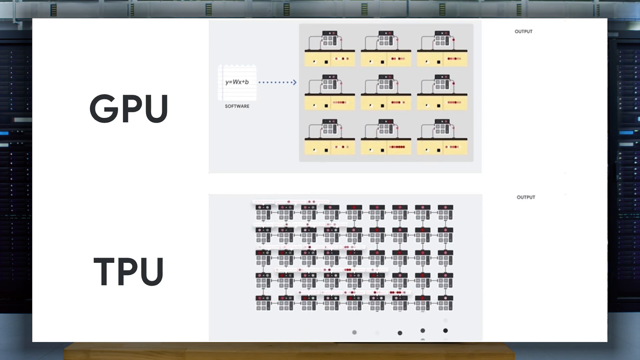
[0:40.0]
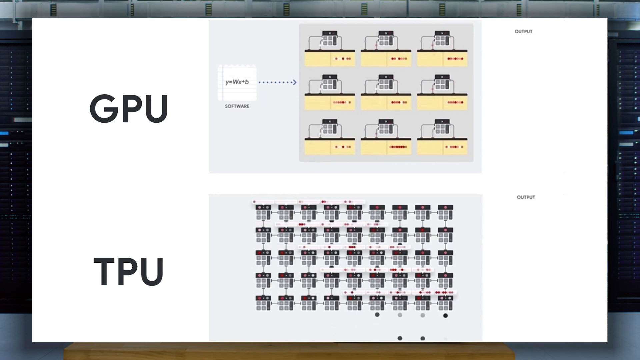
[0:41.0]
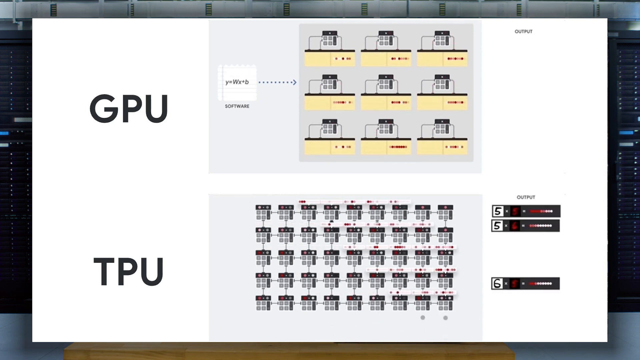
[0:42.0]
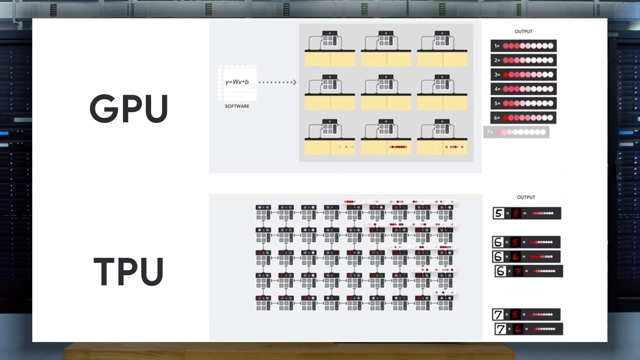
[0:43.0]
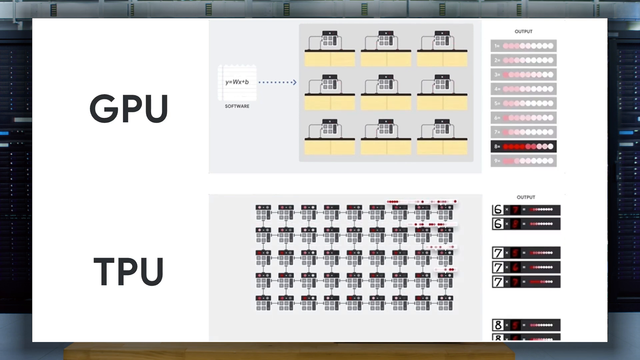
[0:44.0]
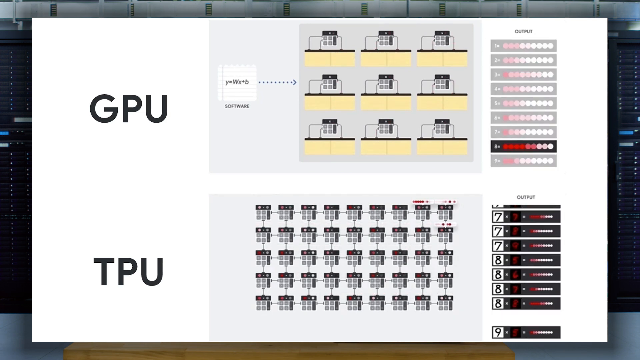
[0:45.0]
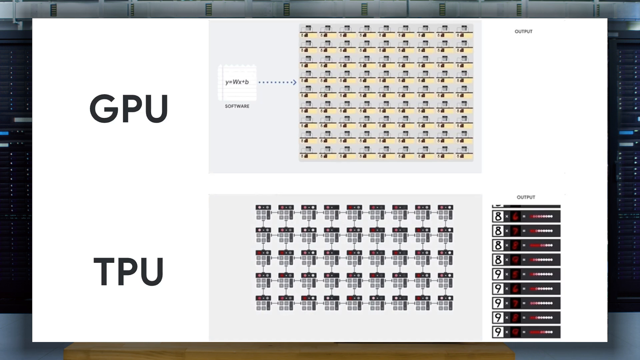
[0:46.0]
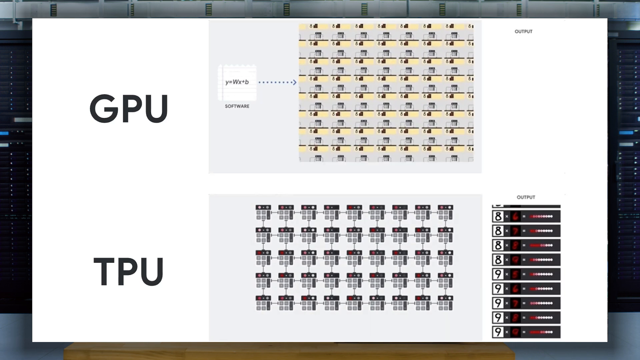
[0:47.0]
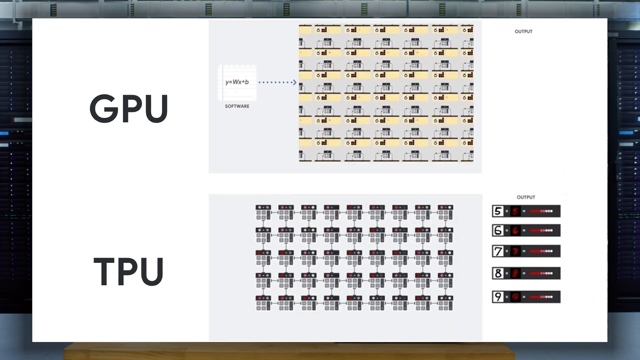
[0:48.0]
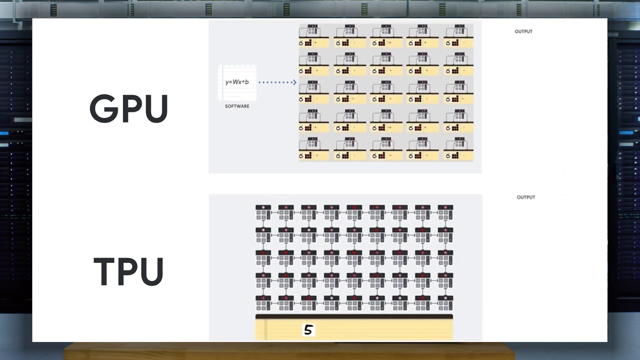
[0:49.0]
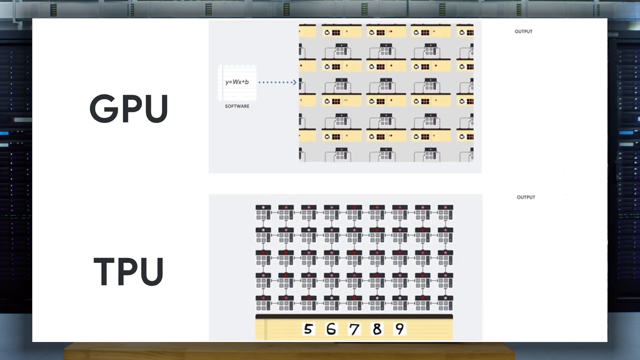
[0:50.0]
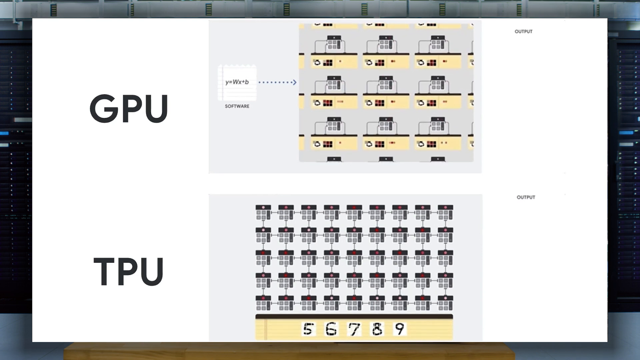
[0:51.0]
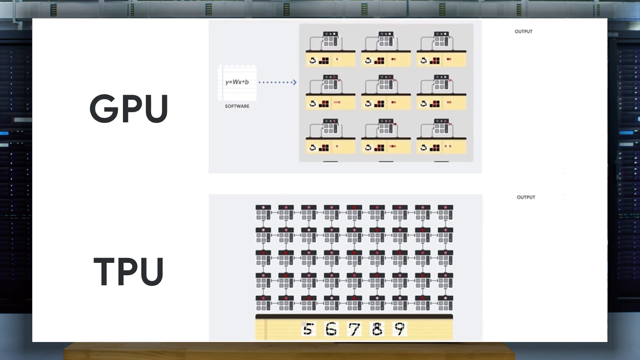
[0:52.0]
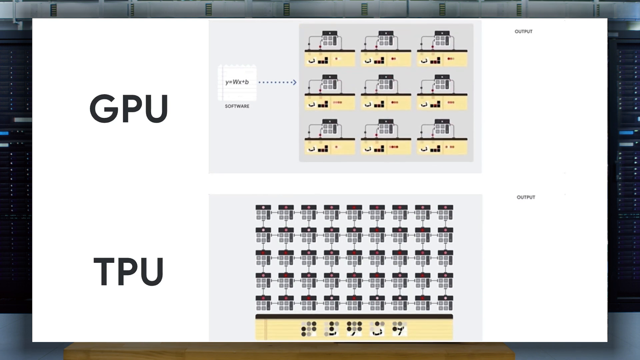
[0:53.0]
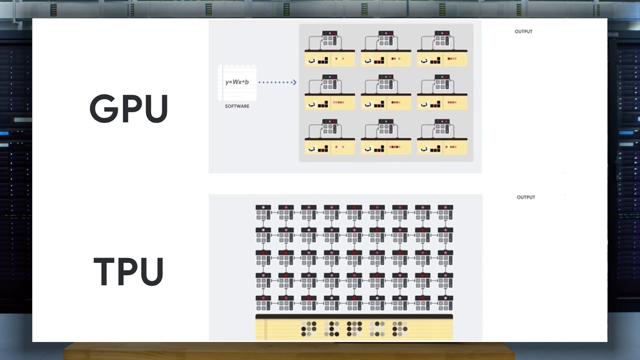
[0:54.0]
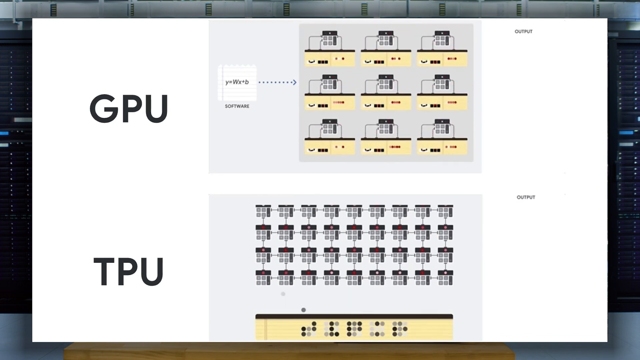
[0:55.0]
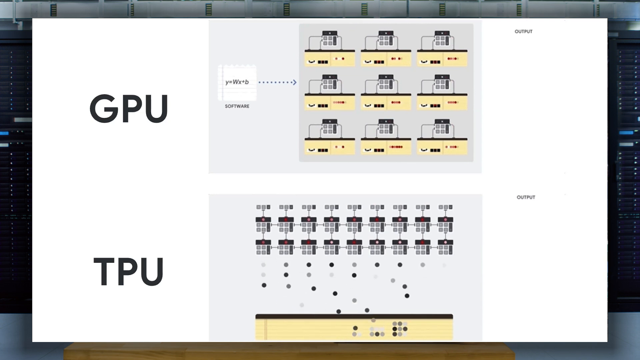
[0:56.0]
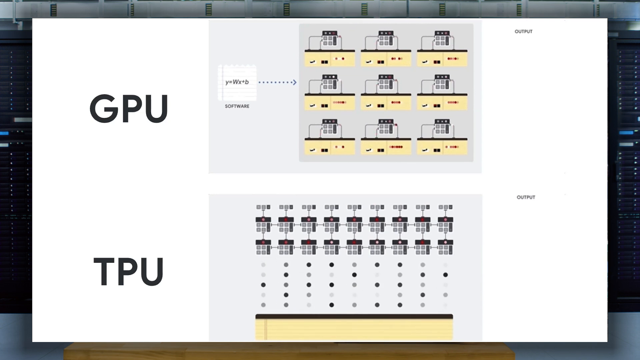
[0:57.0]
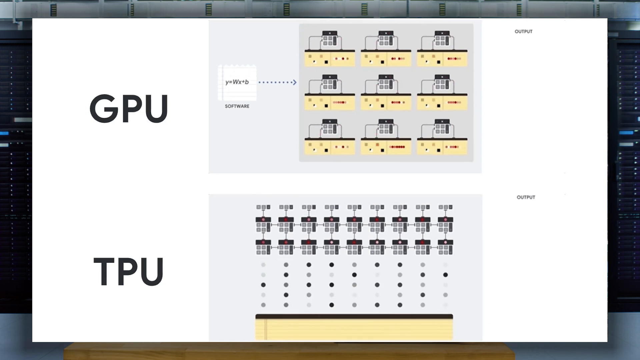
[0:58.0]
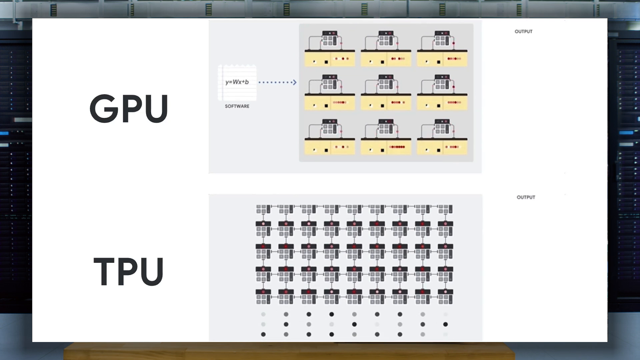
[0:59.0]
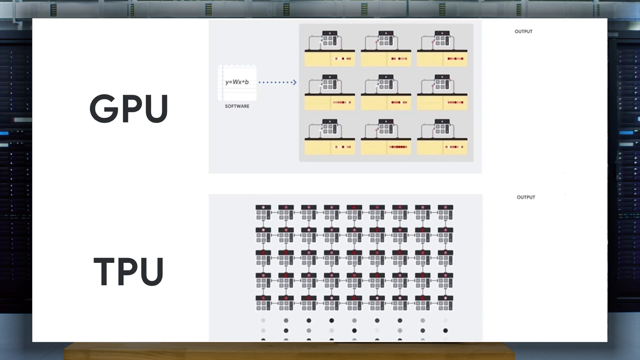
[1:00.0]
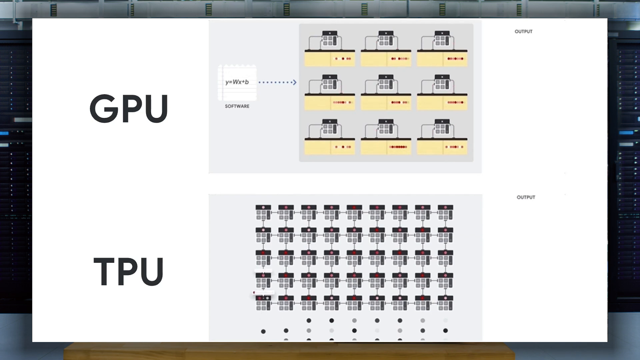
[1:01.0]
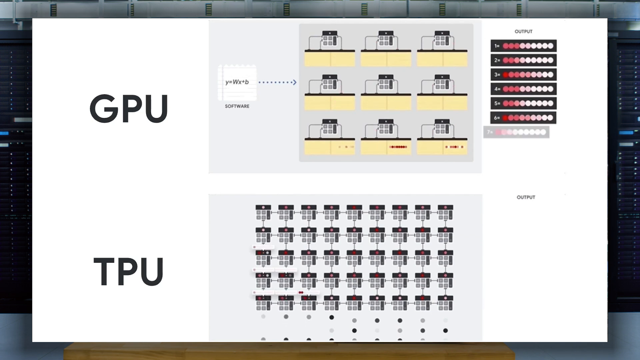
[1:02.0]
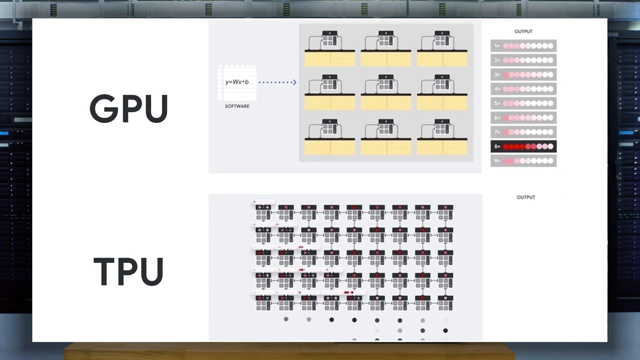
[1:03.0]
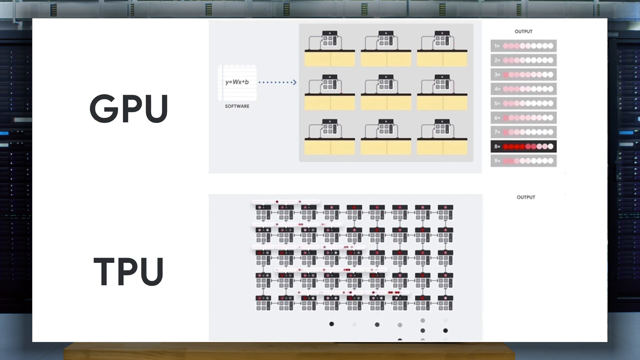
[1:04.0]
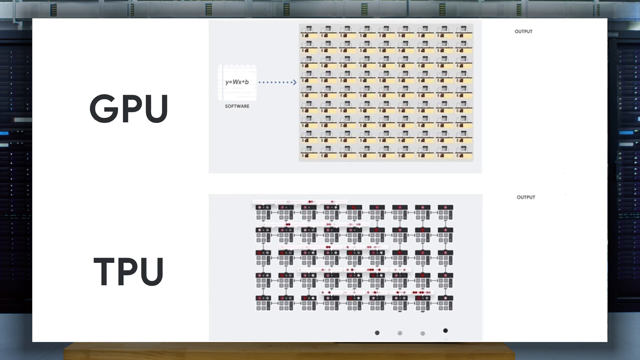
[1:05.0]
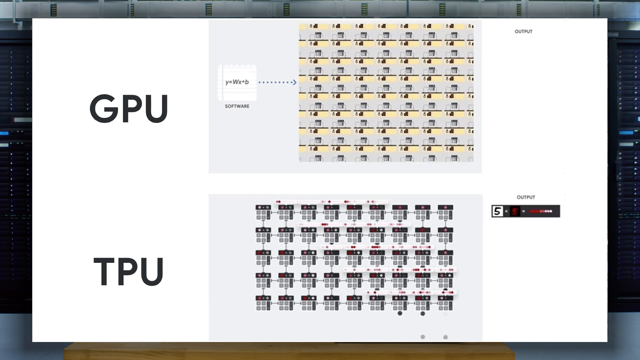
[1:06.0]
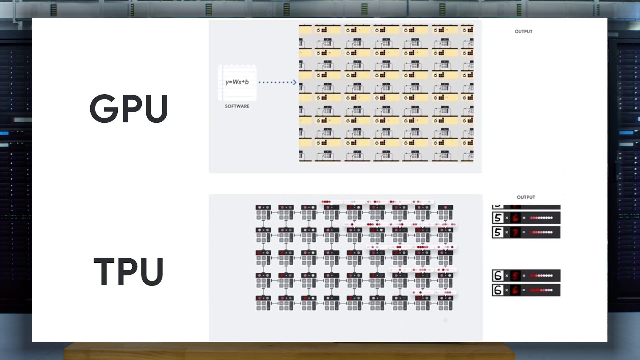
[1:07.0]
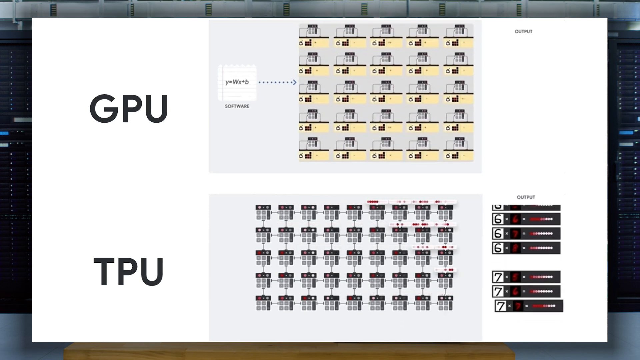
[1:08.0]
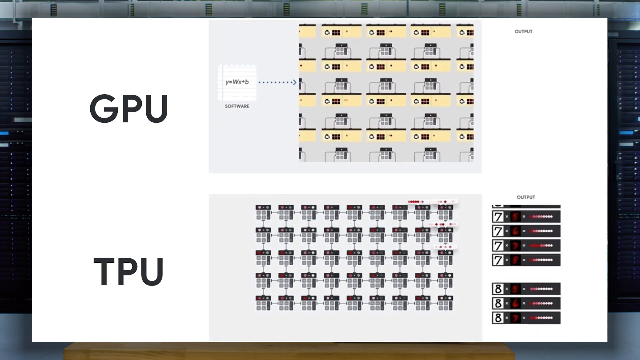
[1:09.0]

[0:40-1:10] The GPU and TPU examples are shown. The TPU seems to have more rows and more, smaller units than the GPU; the GPU seems to have three rows of three, and the TPU probably three times that. Next to the models in the GPU is what looks to be a note paper. Output is then generated on both sides with colorful graphics that all look alike, like some type of meter. The TPU one starts with numbers, with 5, 6, 7, 8, 9 presented at the bottom. These are turned into what seem to be dots of different colors that spread along the paths, seemingly as the numbers get processed into the little units. Random dots go in, which is easier to see in the TPU process, and it also happens in the GPU. On the TPU, the output is displayed on the right-hand side. The view then pans out to show more of the machines.